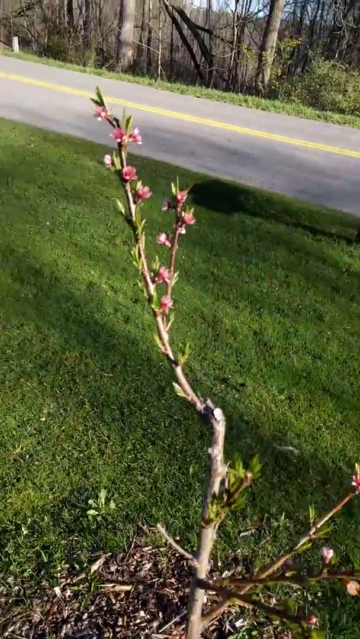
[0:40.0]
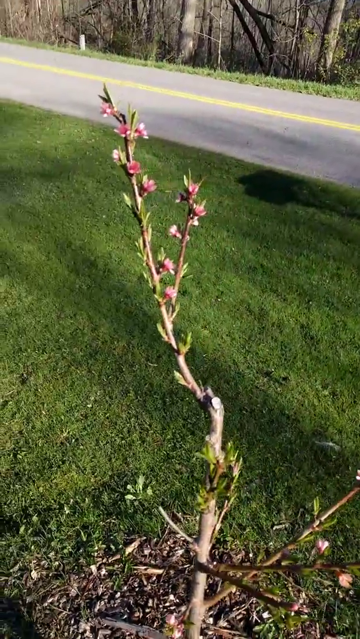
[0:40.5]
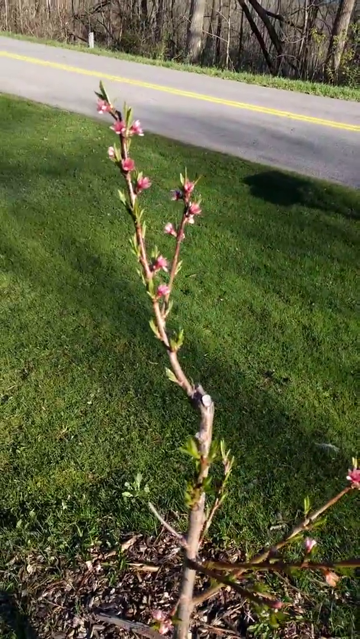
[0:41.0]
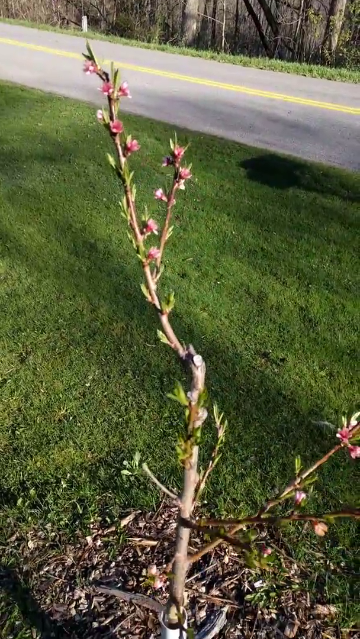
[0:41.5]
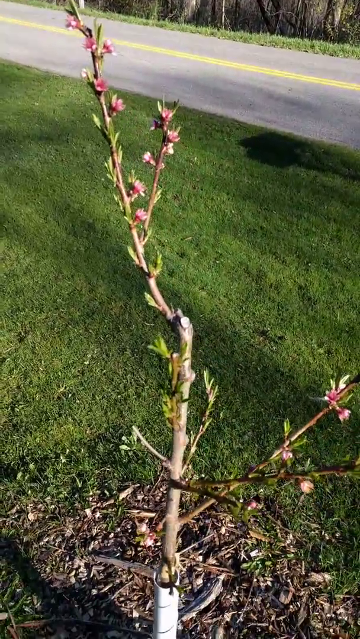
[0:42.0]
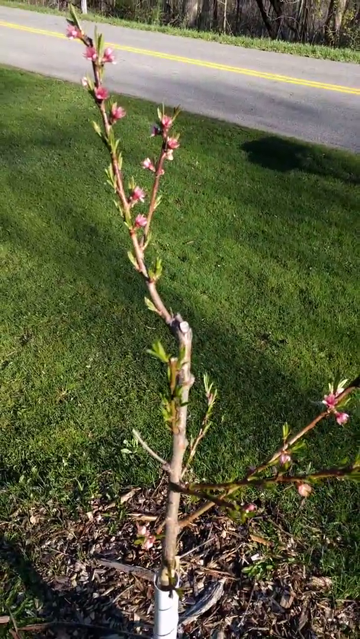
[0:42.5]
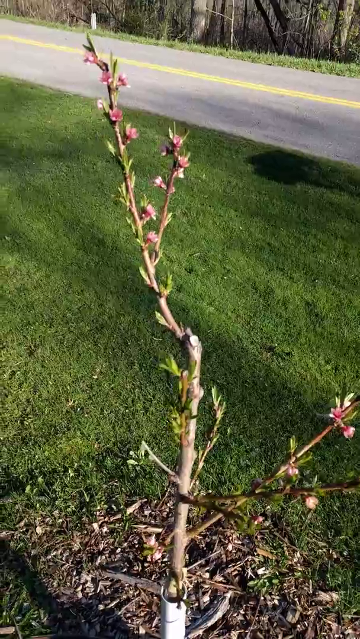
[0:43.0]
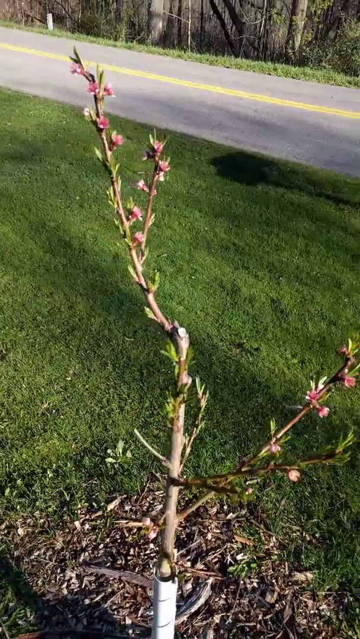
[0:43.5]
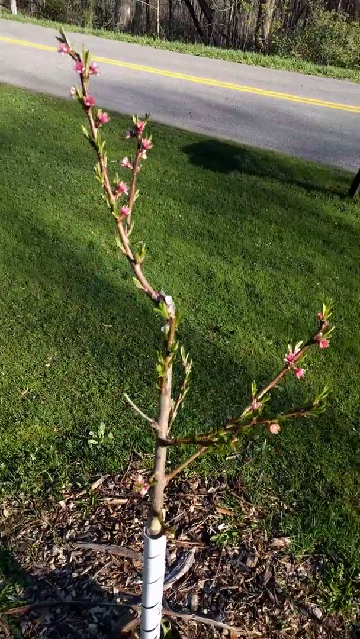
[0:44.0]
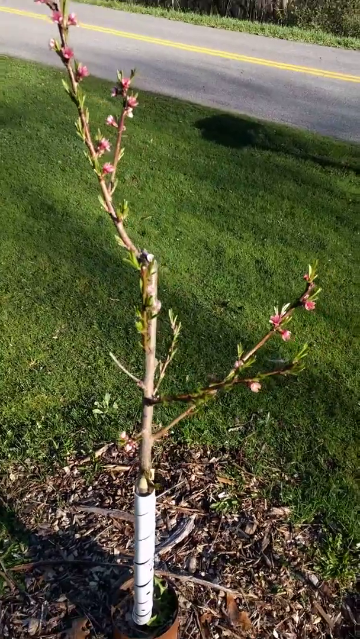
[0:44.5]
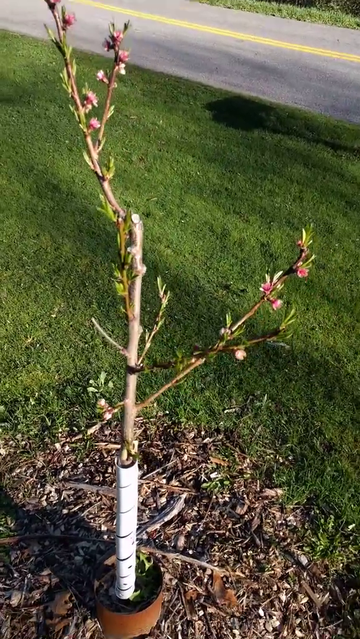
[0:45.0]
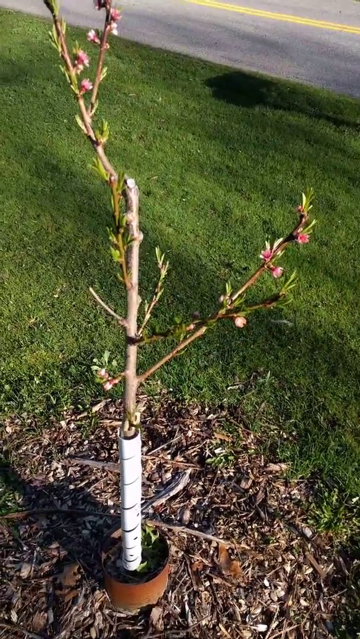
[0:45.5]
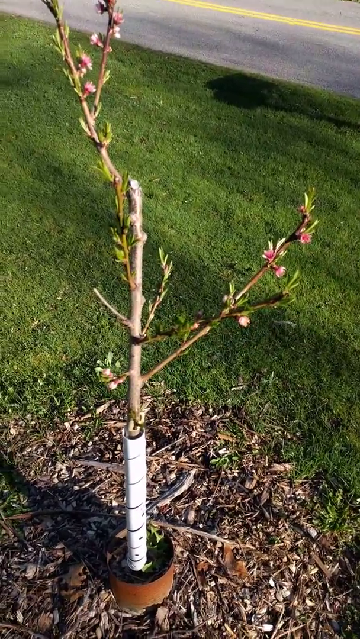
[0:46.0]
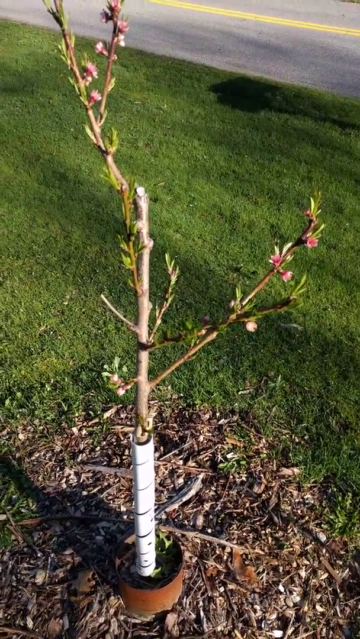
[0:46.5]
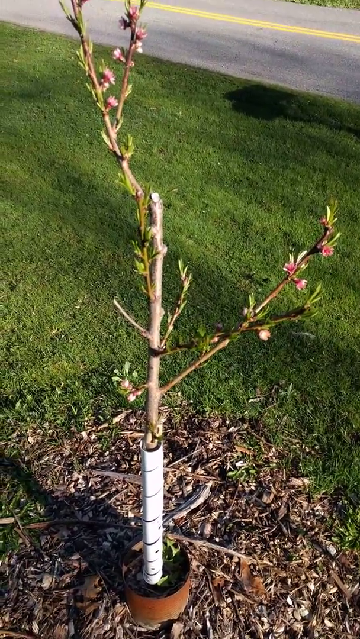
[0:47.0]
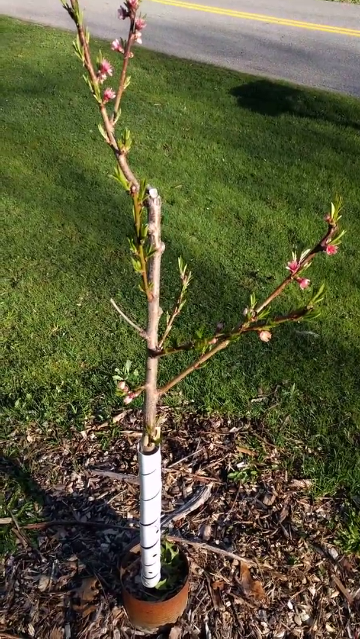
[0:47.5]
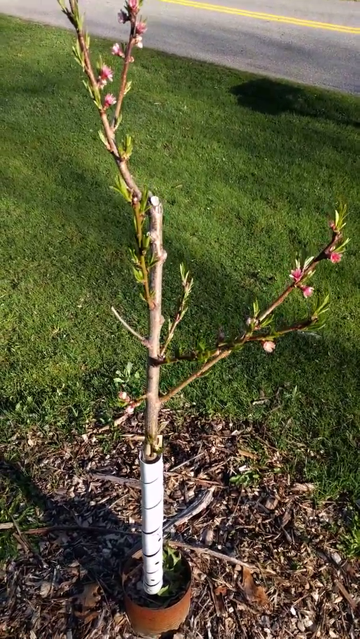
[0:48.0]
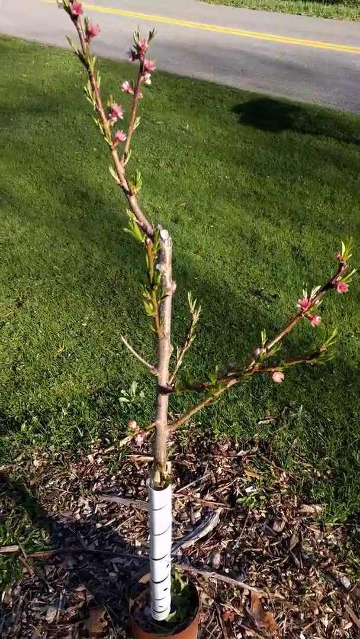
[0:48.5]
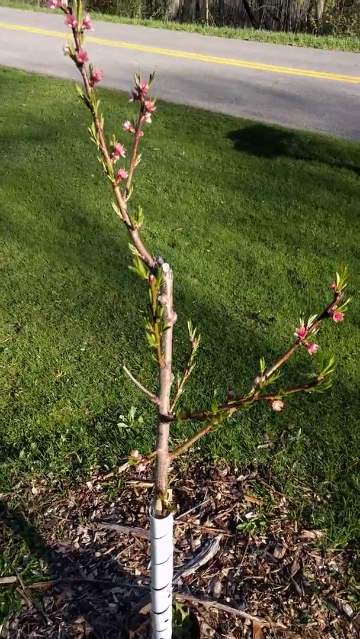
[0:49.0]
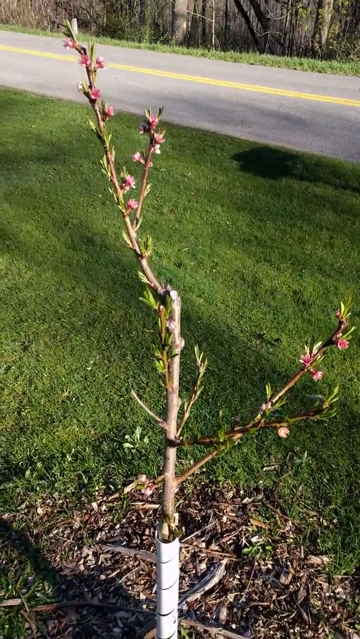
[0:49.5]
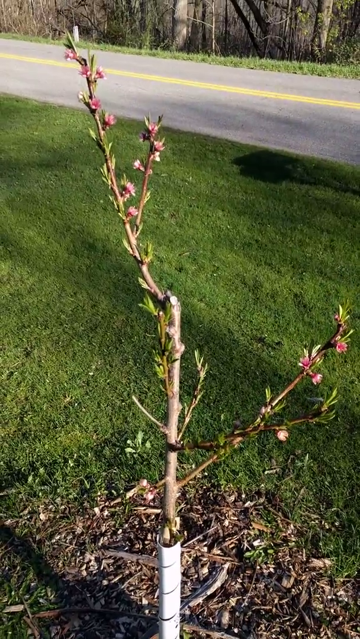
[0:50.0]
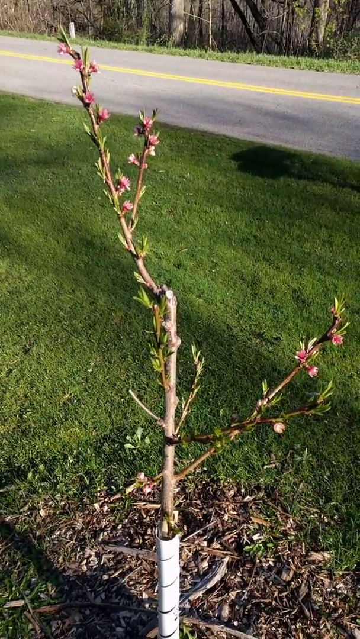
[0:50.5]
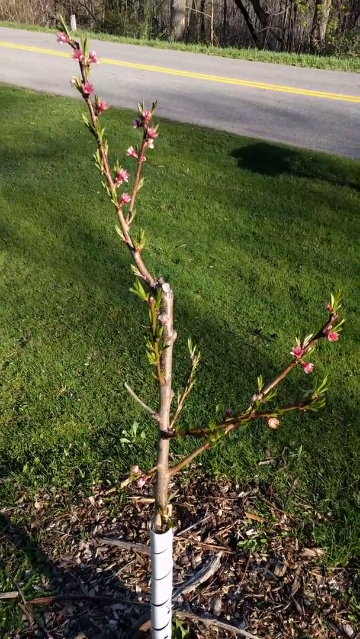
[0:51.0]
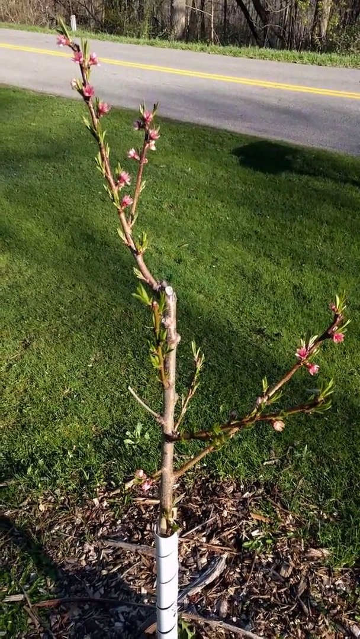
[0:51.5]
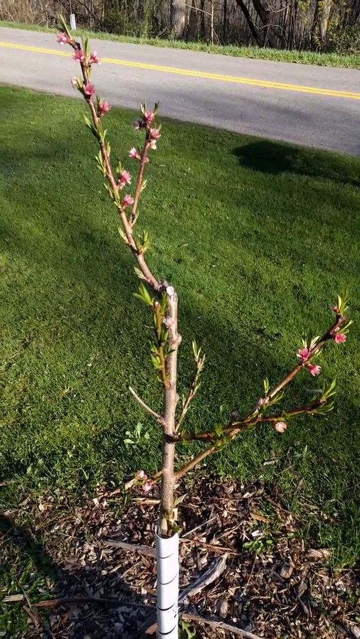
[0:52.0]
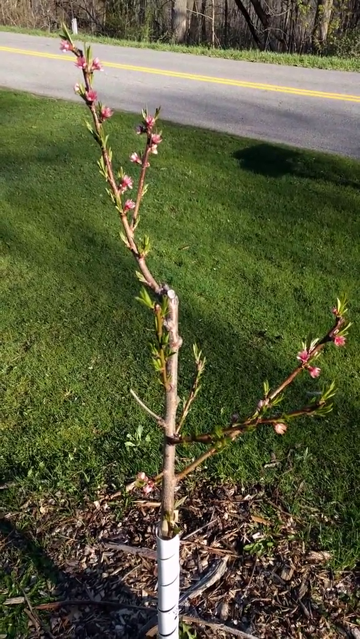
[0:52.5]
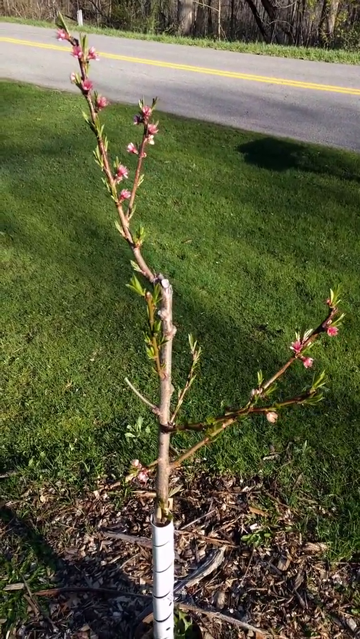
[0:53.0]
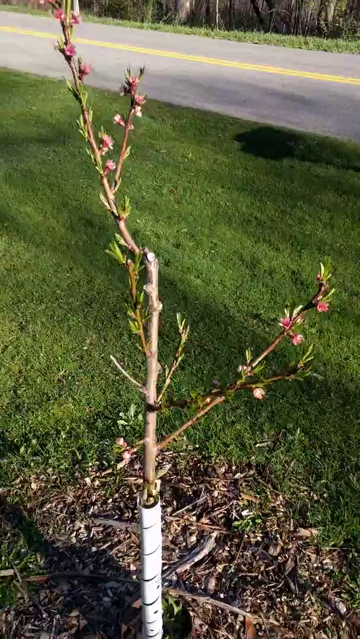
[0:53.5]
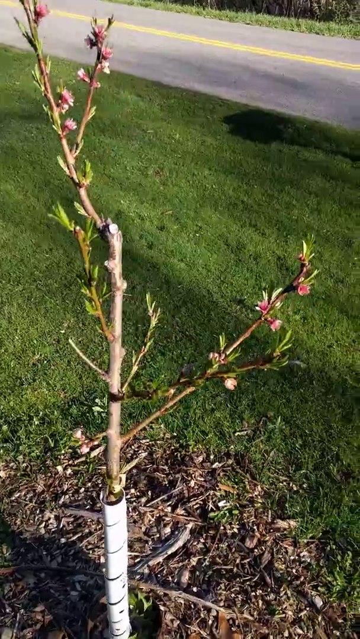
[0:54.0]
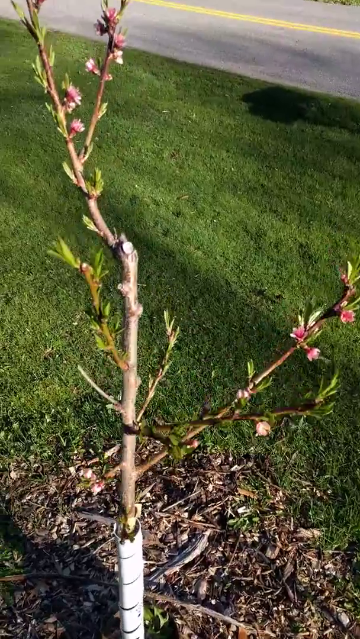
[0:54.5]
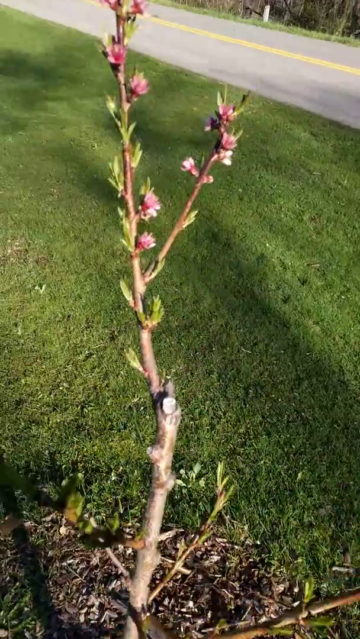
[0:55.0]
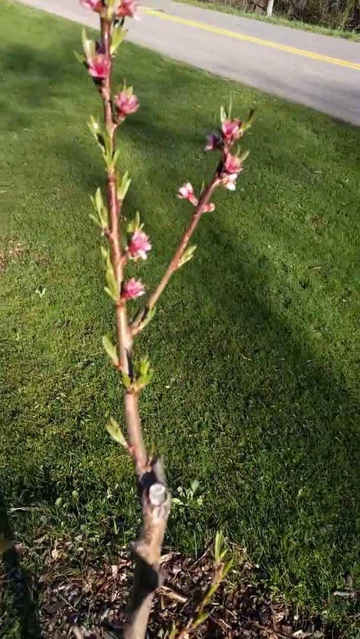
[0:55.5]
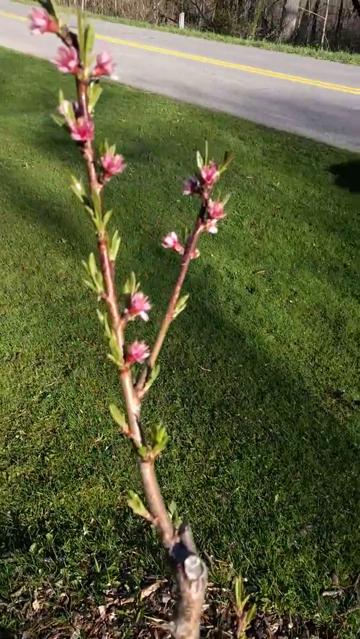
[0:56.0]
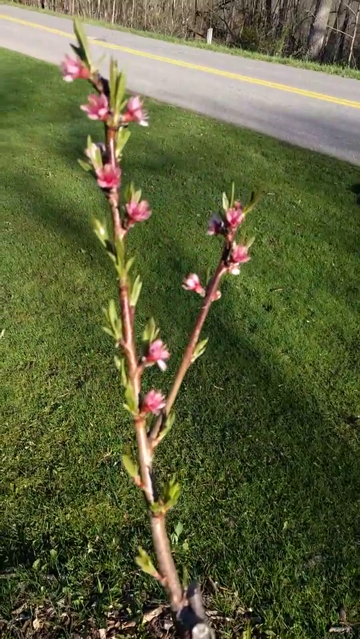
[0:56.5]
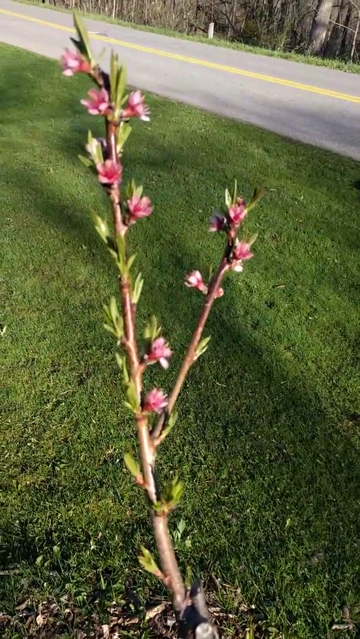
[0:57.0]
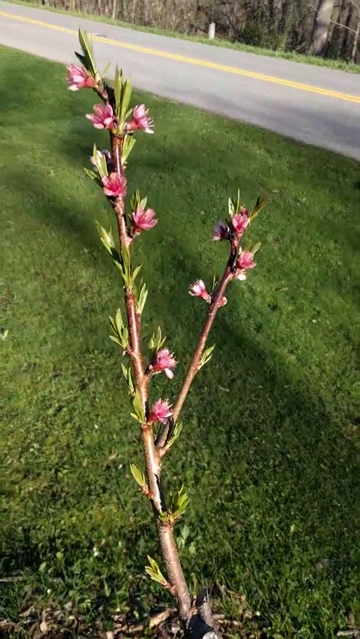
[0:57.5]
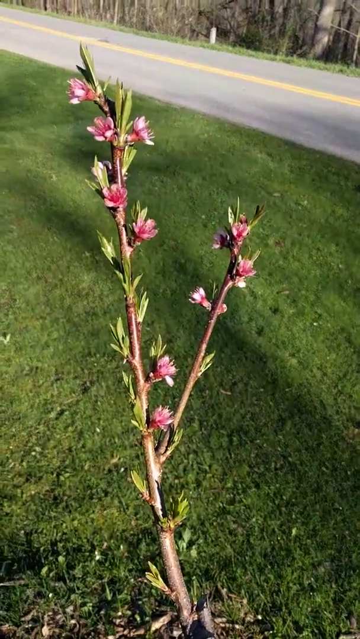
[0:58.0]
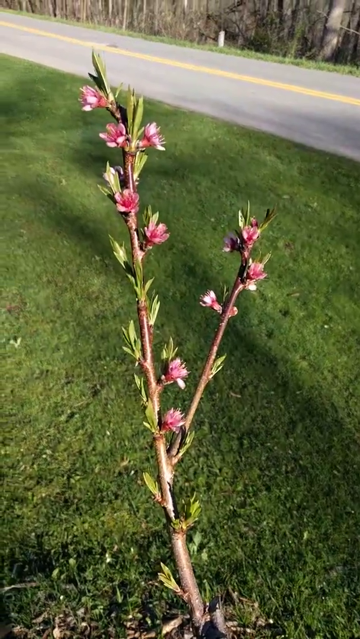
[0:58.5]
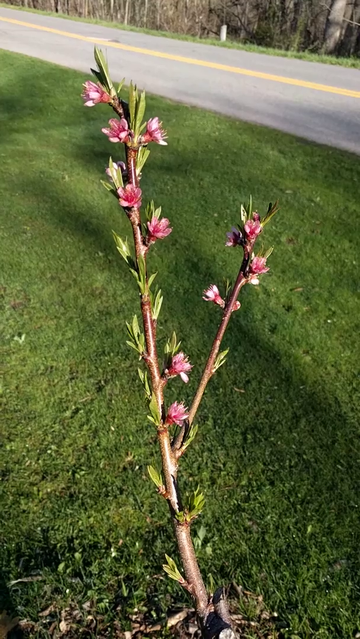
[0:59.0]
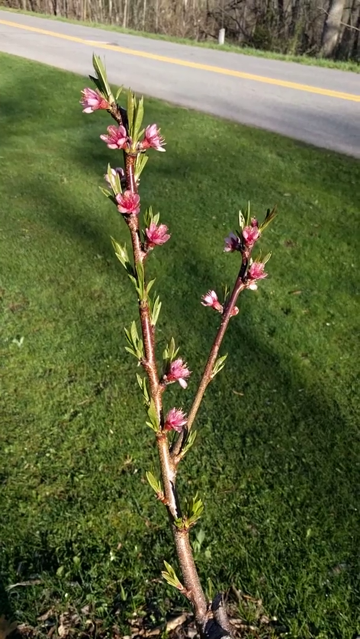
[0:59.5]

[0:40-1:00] The low-quality mobile phone recording continues, showing the branches of the tree planted in the ground in a garden, apparently in front of a home. Pink flowers grow on the branches. The person again shows the first tree with its flowers. Green grass and a road with a yellow strip on it are visible, and behind the road is a forest with big trees and leaves.